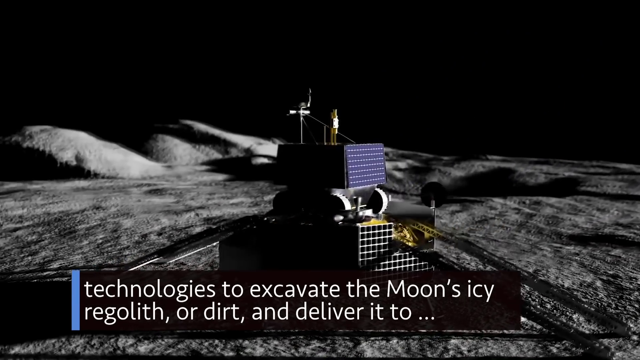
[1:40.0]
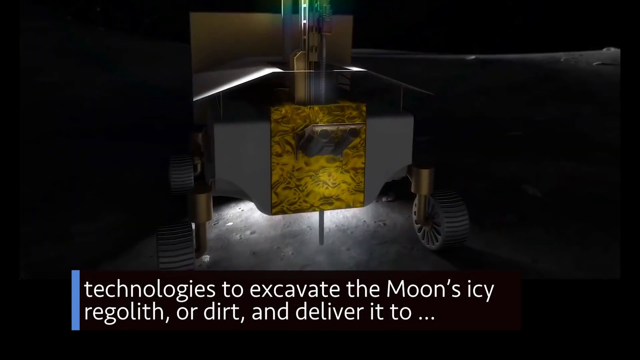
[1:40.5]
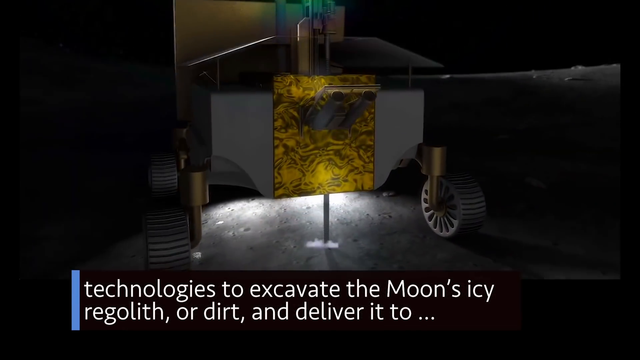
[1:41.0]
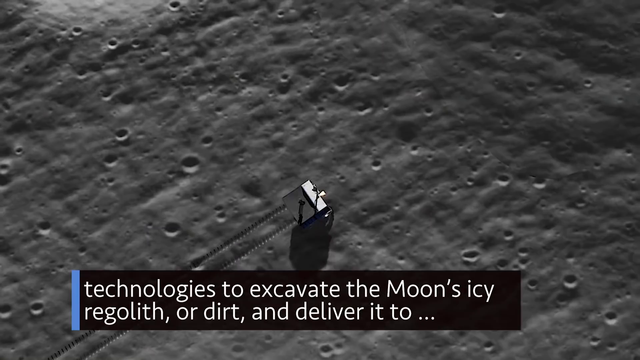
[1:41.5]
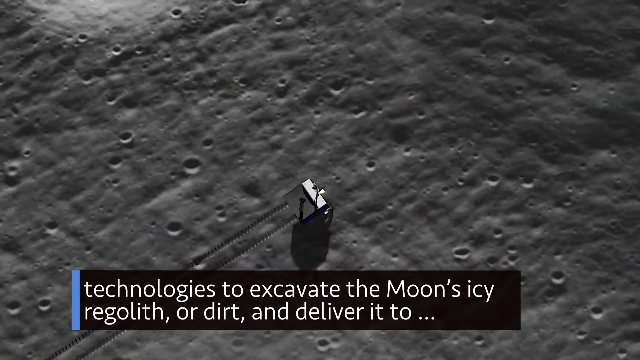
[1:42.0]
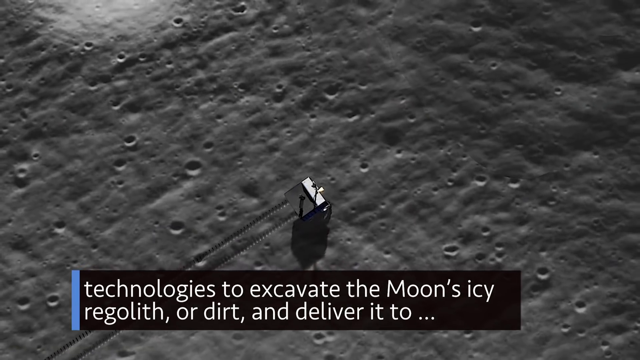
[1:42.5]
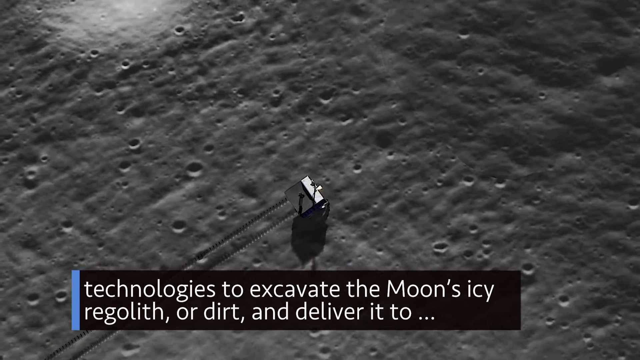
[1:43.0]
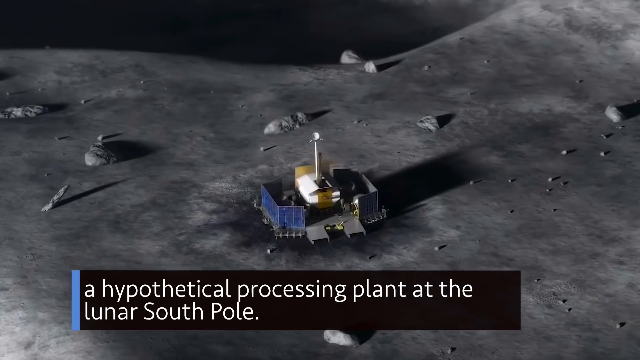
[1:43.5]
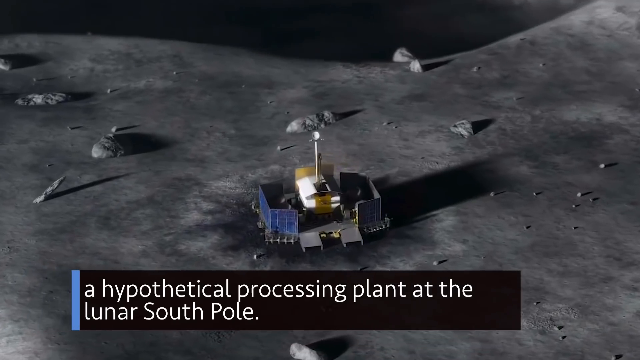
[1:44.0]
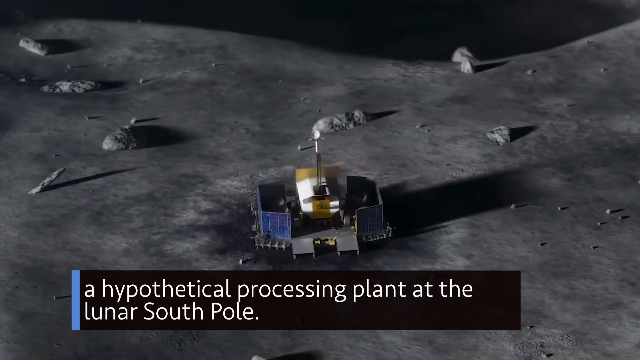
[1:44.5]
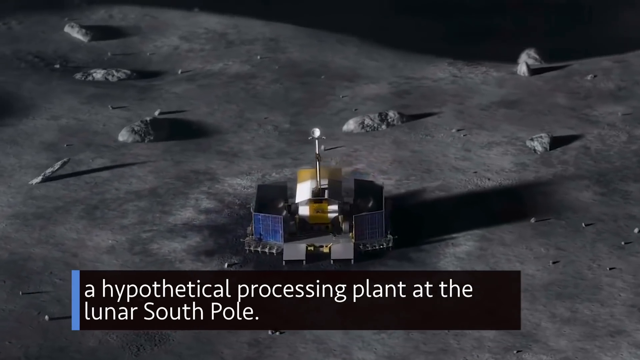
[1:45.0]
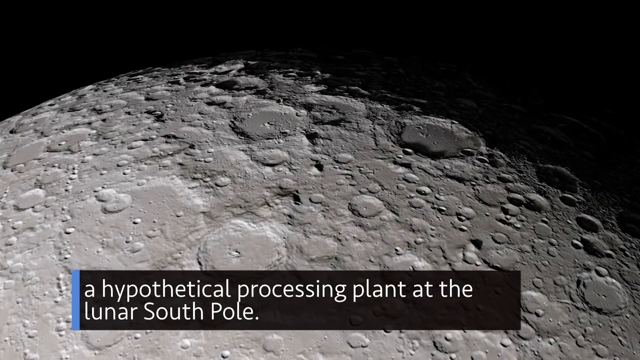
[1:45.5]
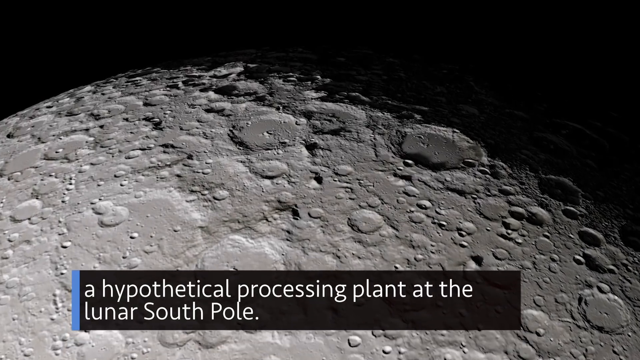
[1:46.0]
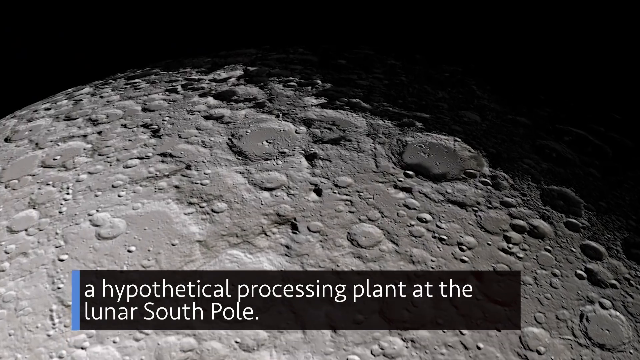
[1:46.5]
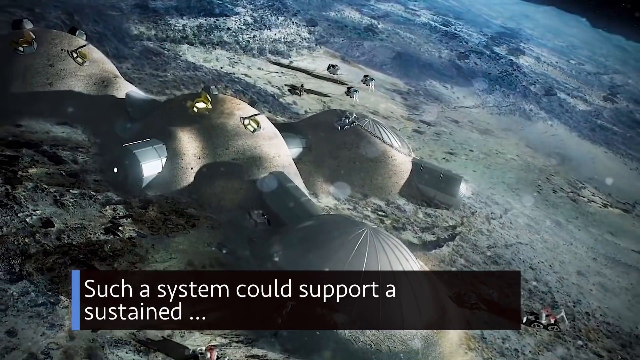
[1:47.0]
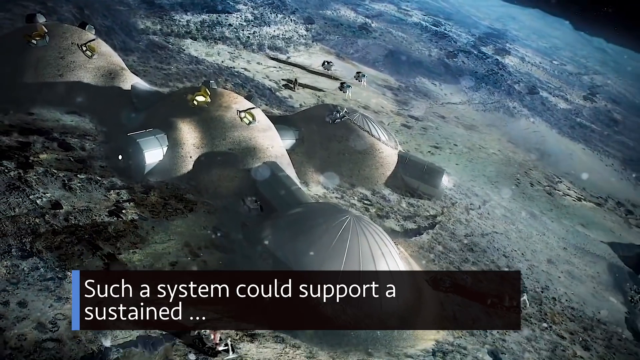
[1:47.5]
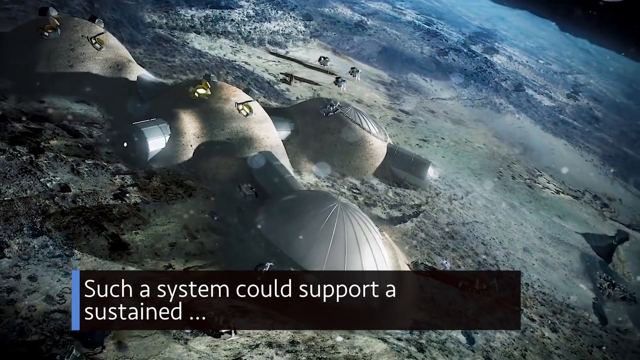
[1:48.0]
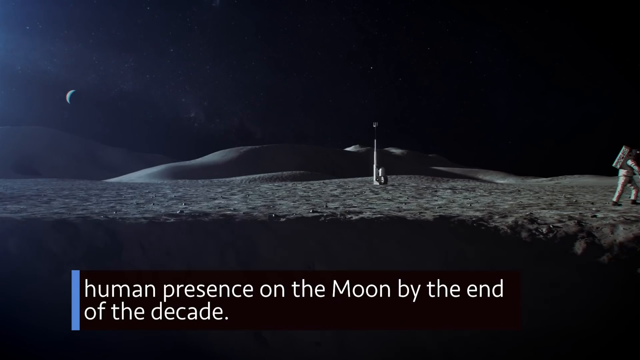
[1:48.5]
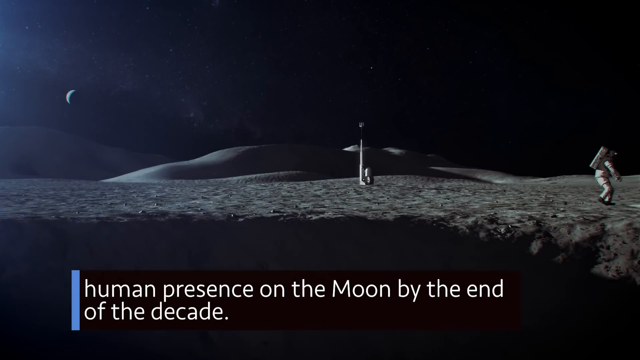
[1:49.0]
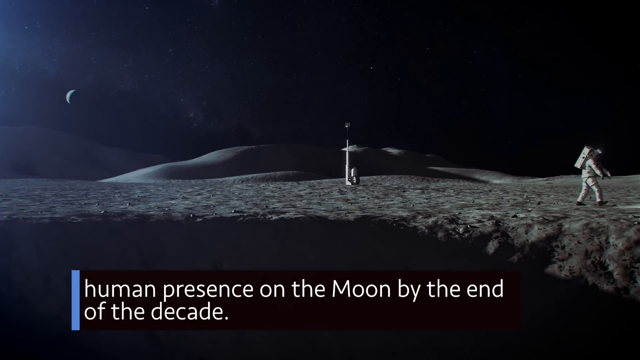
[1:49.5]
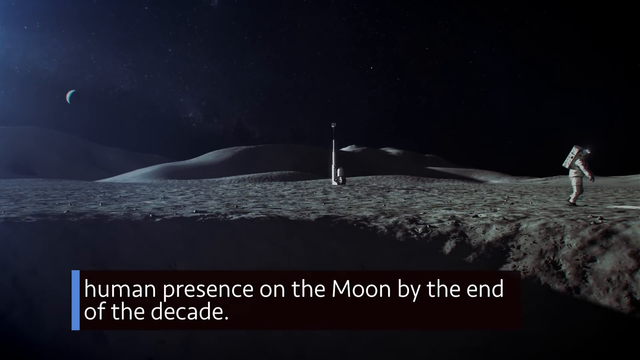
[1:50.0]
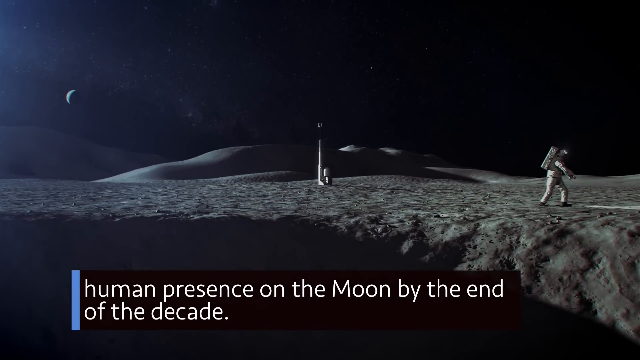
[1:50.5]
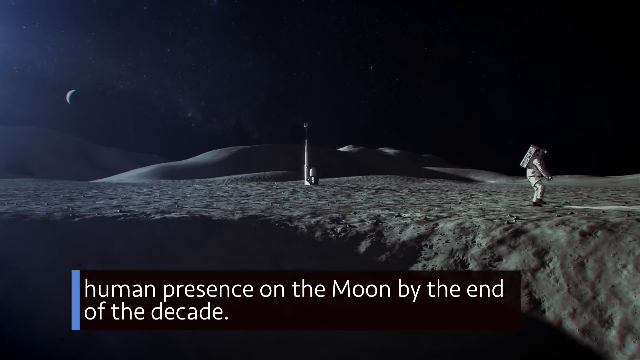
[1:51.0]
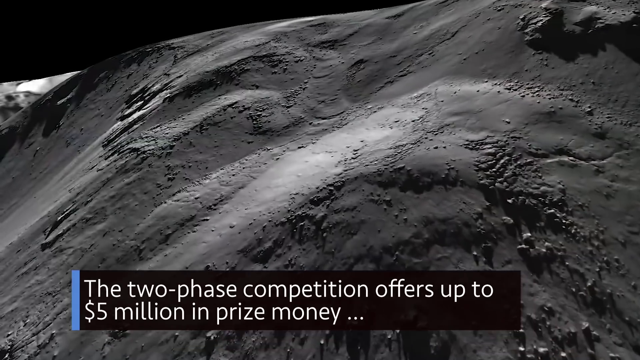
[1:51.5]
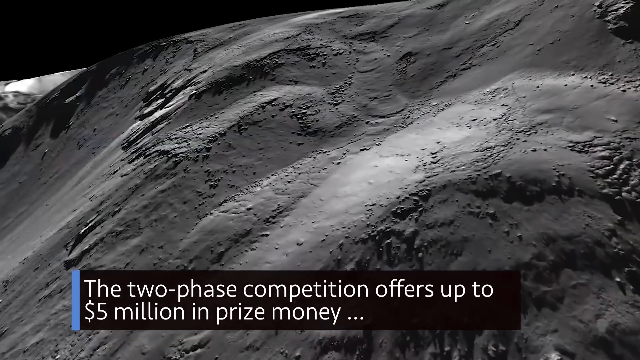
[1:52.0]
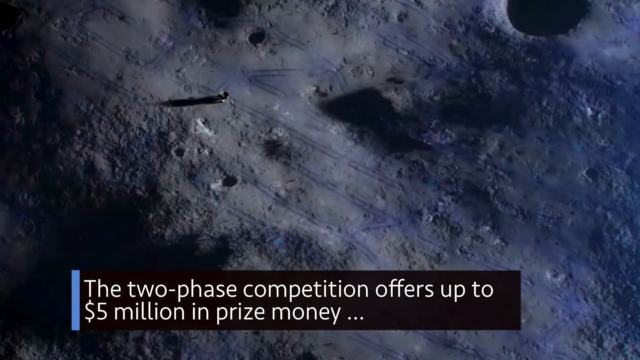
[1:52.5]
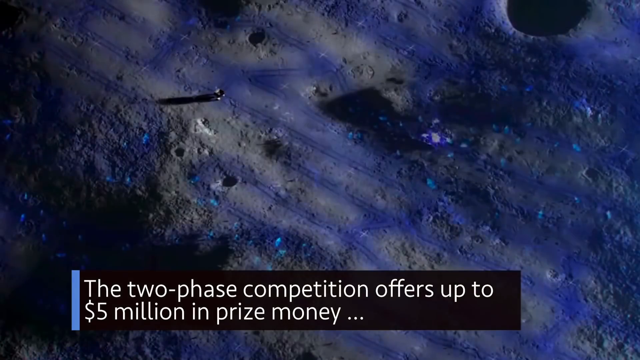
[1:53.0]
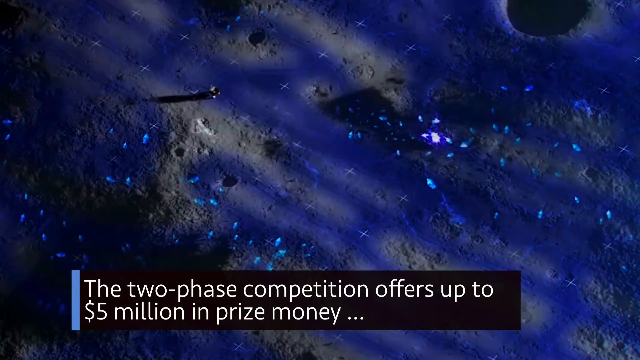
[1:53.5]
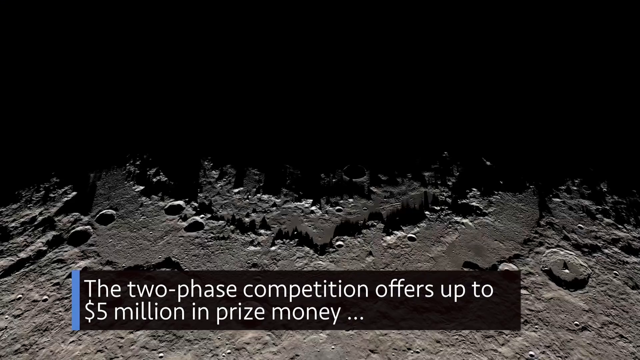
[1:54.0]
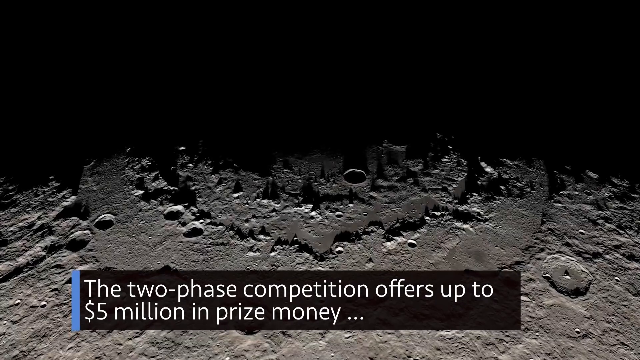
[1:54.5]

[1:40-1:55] A series of pictures of the moon appears: close-ups of the moon, close-ups of vehicles on the moon, something like a little station on the moon, another object on the moon, a man walking on the moon, and more close-ups of the moon.